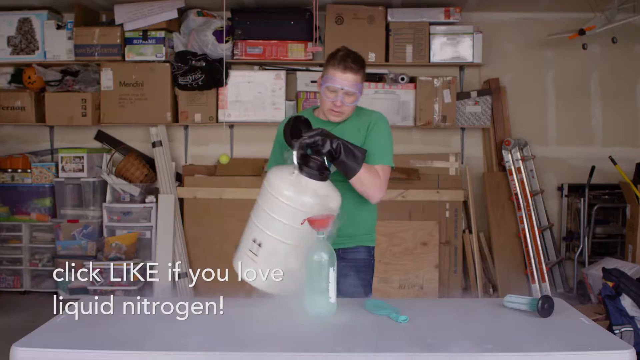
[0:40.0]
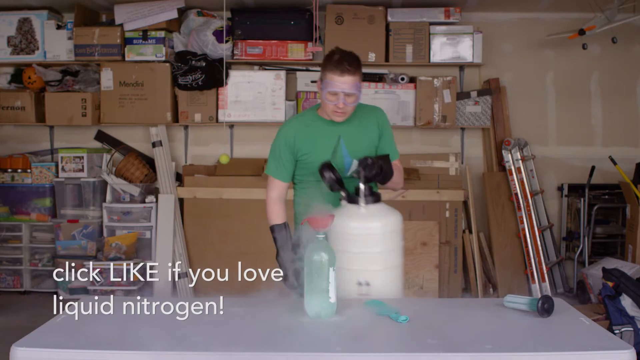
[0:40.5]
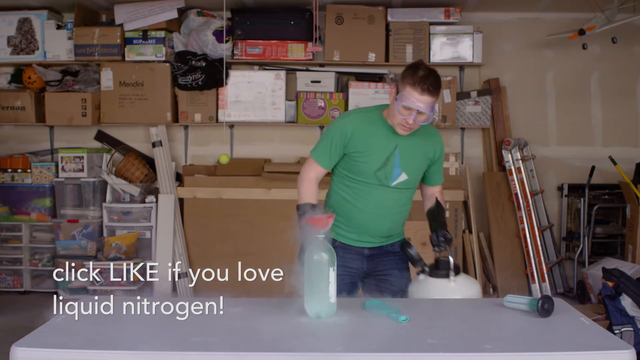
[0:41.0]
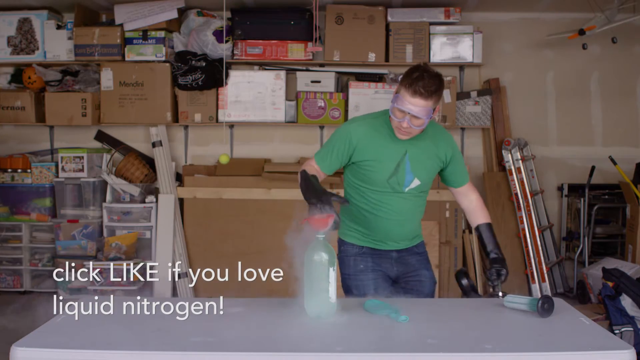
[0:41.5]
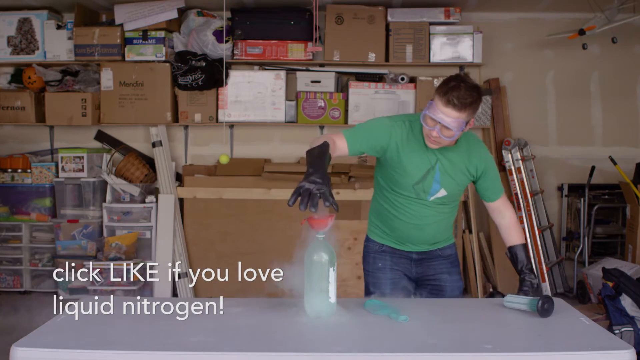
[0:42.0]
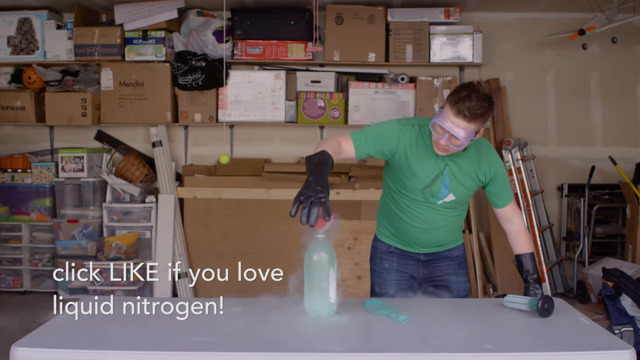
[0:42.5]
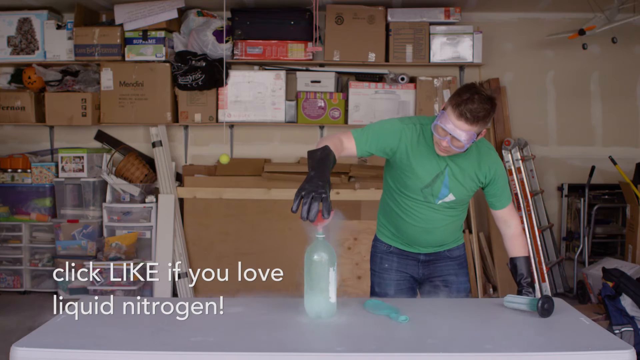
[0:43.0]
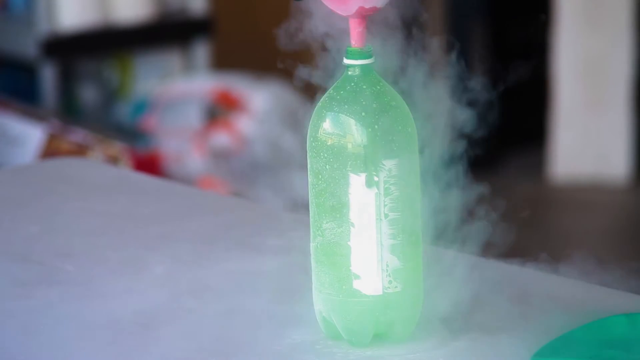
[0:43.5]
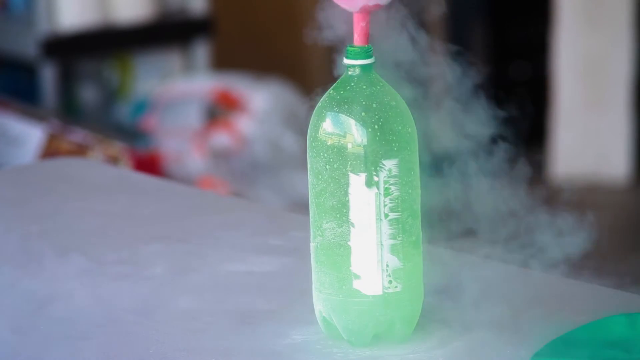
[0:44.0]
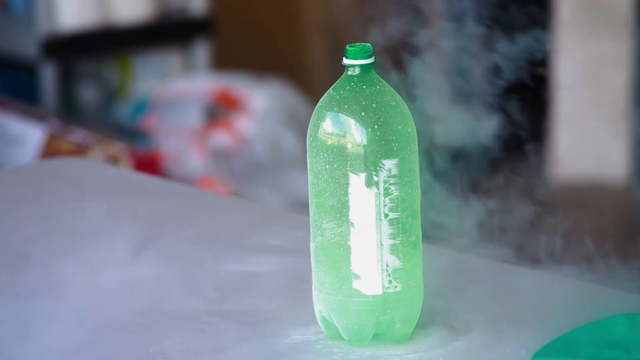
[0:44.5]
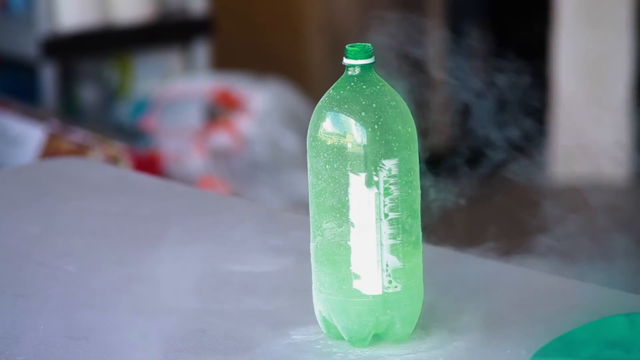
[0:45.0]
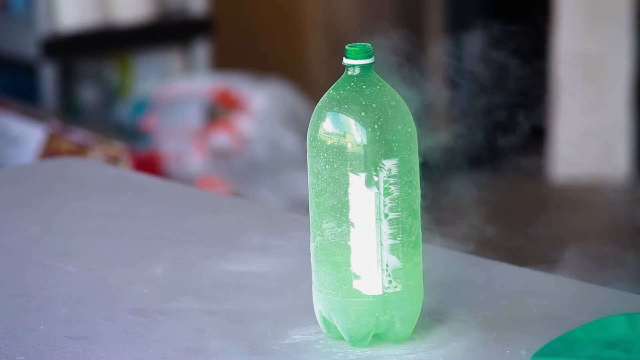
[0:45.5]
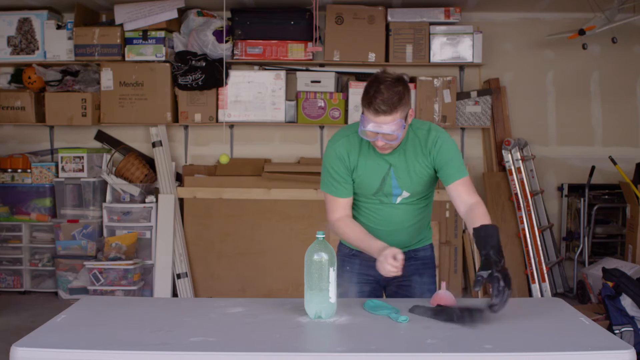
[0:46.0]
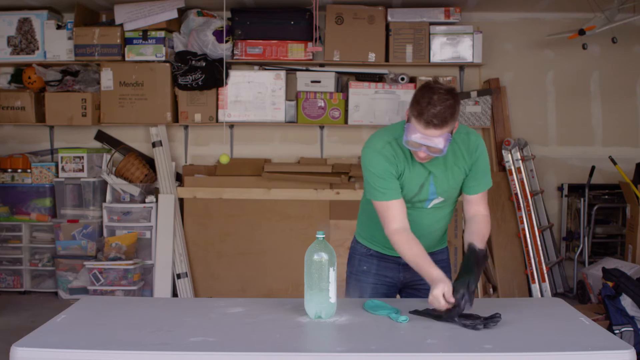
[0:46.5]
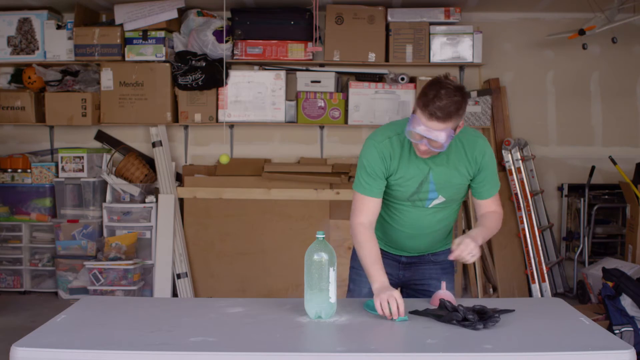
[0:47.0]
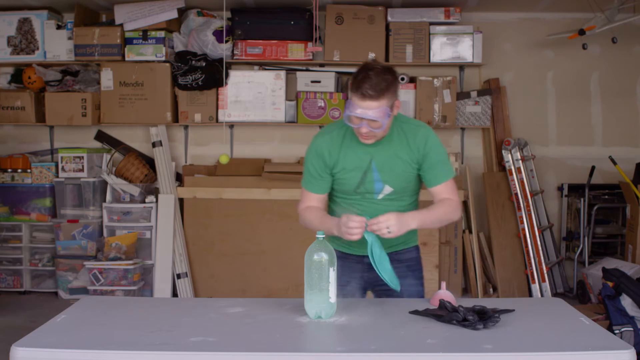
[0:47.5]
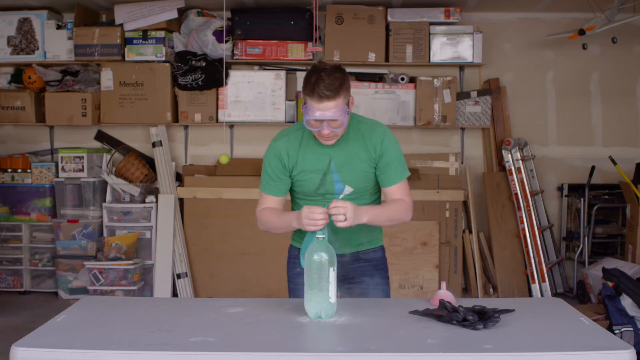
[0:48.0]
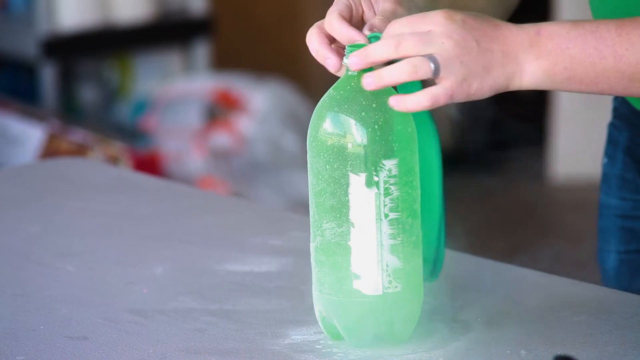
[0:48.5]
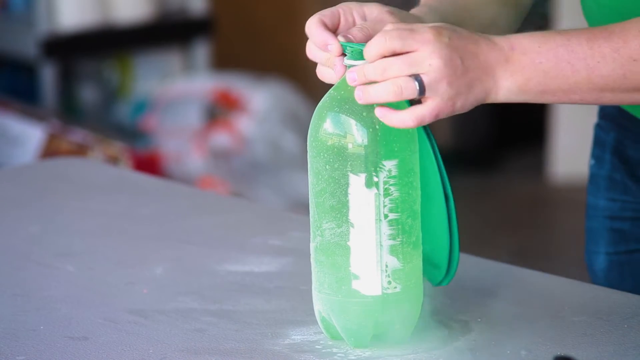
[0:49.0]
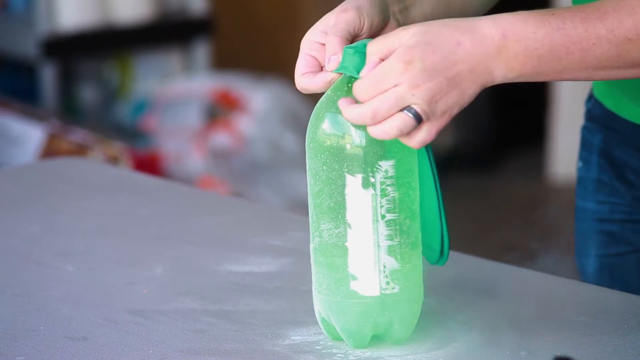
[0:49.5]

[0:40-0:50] A man in a t-shirt is with an empty green bottle on the table. He takes his black gloves off, and there is an empty green balloon, which he pushes on. Nitrogen is put through a red funnel into the empty green bottle lying on the table, and the man holding the nitrogen tank pours it into the bottle. The man has black gloves and goggles on.